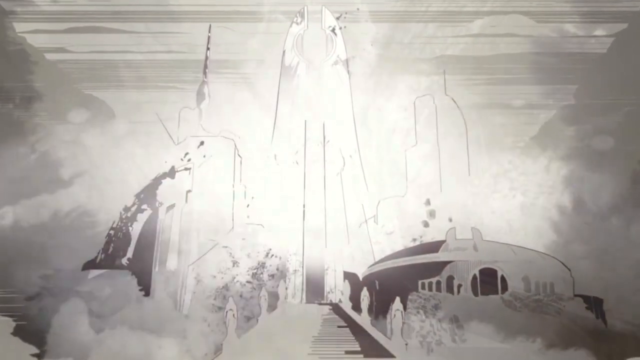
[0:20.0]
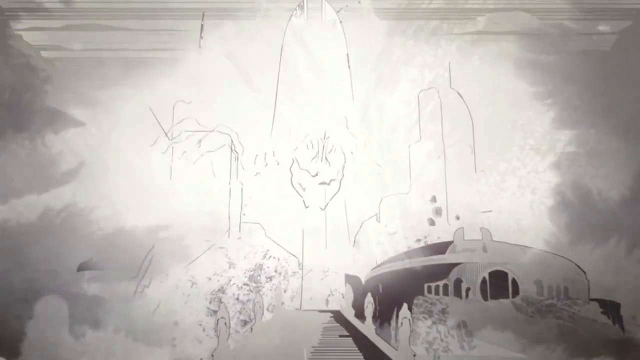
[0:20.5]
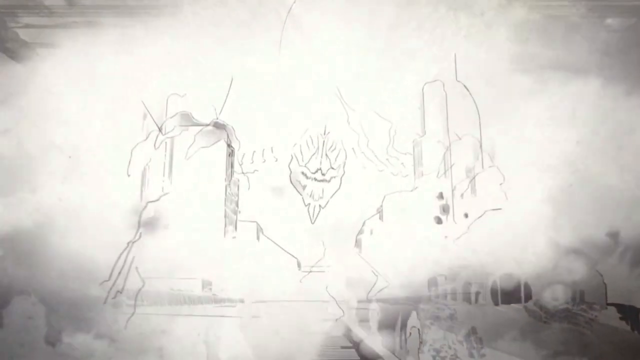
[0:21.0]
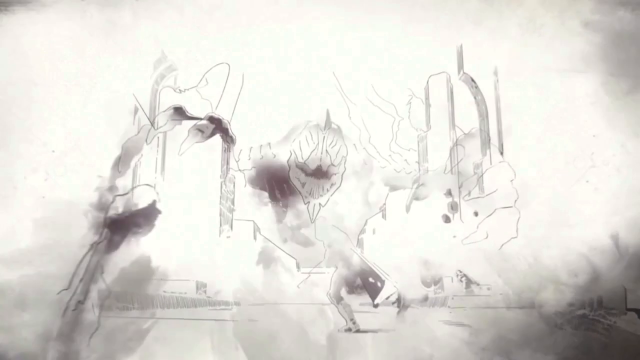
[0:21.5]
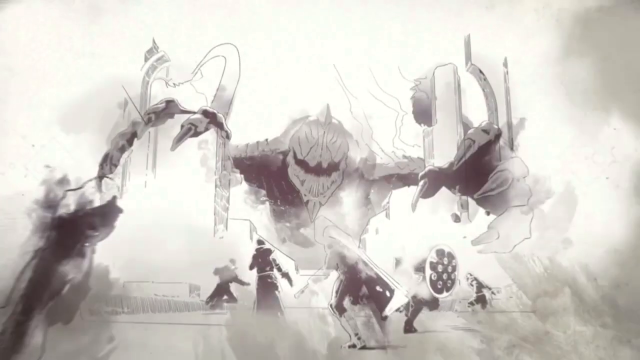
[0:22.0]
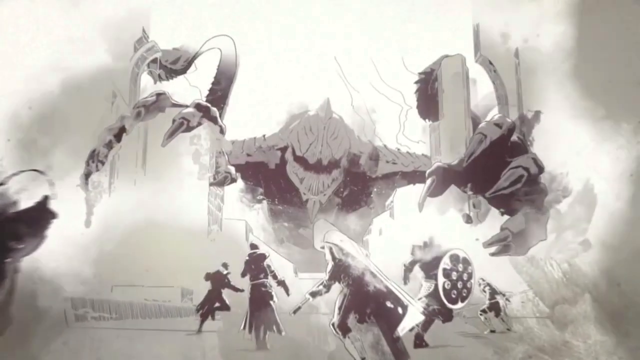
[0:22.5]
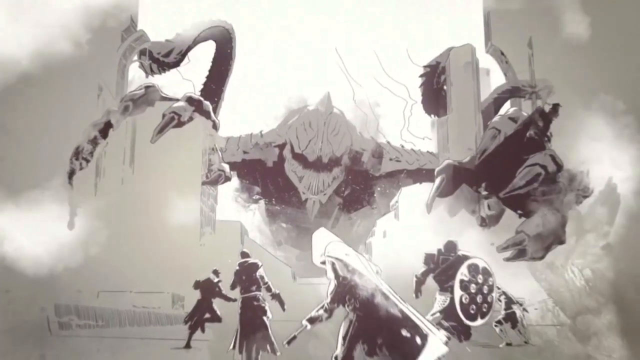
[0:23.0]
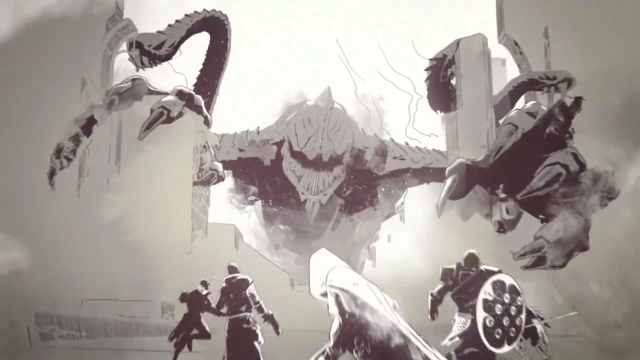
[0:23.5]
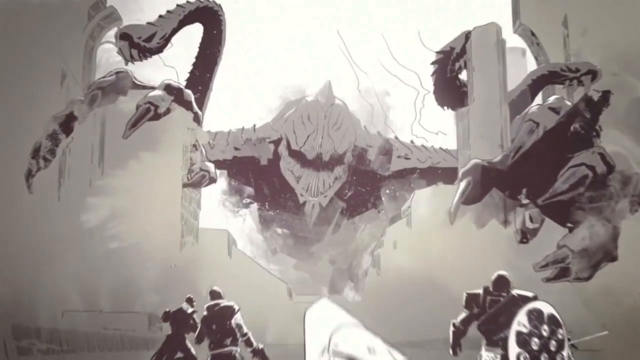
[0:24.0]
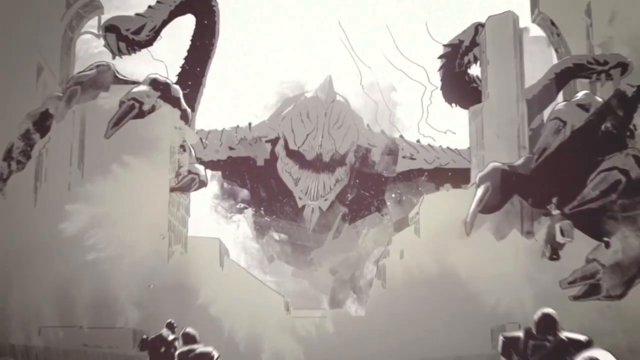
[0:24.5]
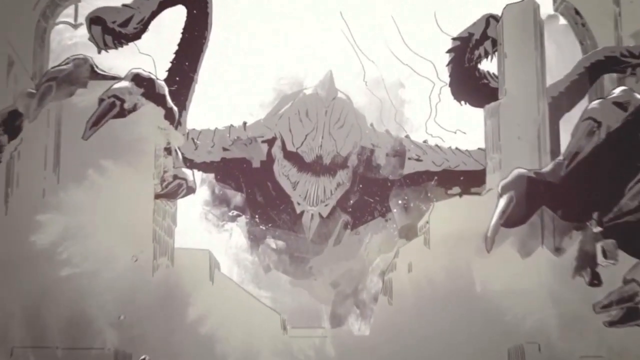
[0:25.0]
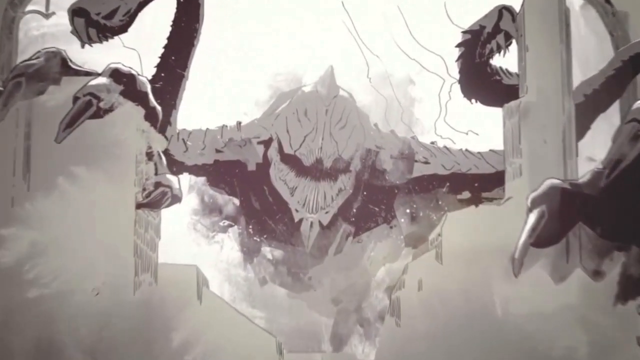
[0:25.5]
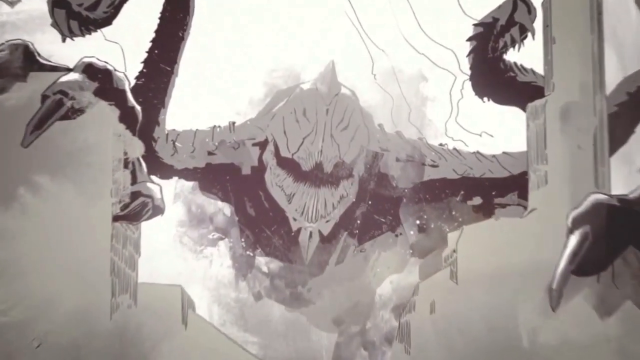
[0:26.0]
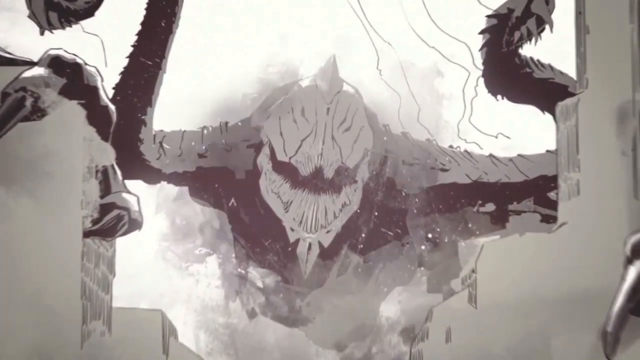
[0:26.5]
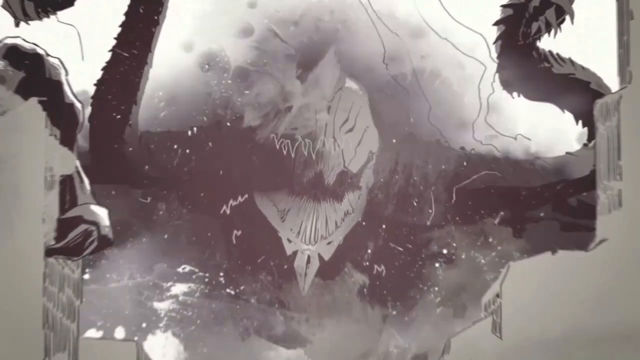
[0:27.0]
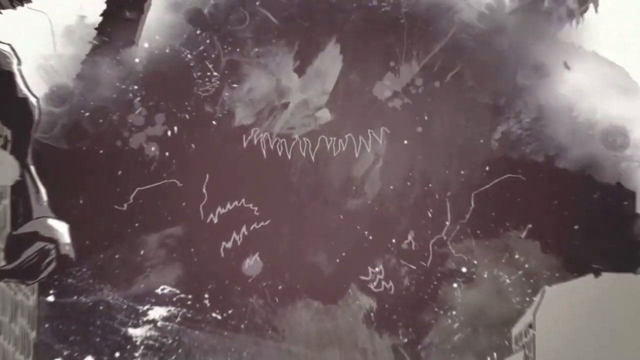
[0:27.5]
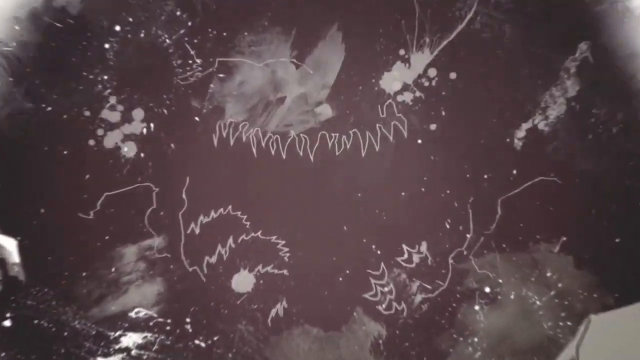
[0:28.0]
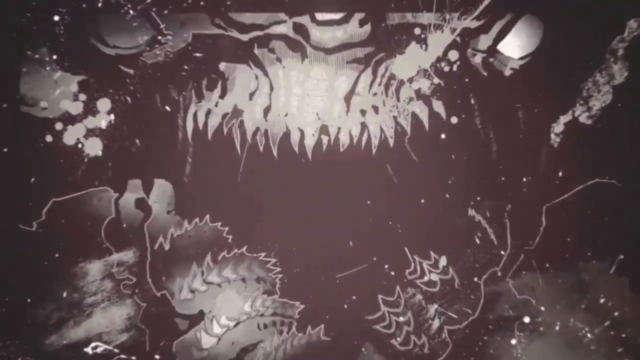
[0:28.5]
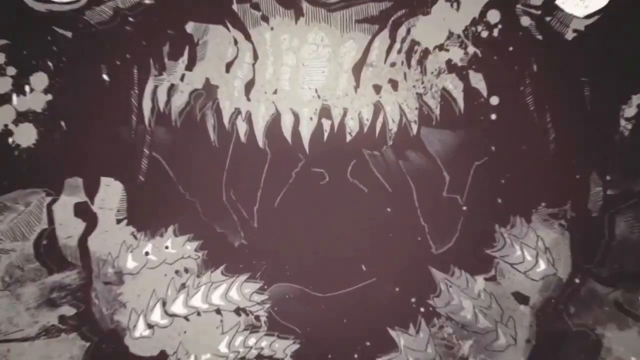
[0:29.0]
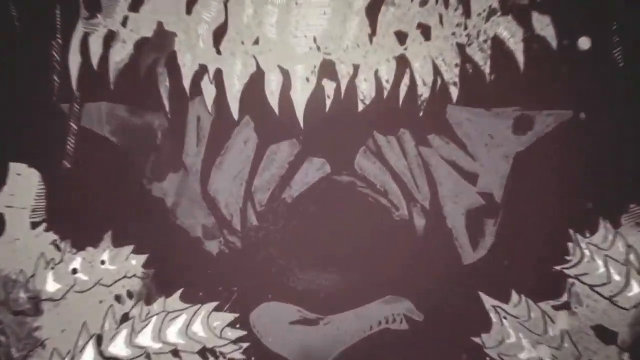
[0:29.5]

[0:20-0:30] Buildings start getting sketched against a grey background, and a flash of light emerges. A giant monster attacks the buildings while a lot of people on the ground scatter, some of them wearing shields. The camera zooms into the monster as it has its claws on the brick walls; its mouth is open. The monster disappears, and sketches lead into the monster's mouth. The civilization is destroyed by this unknown creature. Everything is a powdery grey: the monster is sketched in grey, and the people and the civilization are sketched in a muted colour tone. The whole look seems dull.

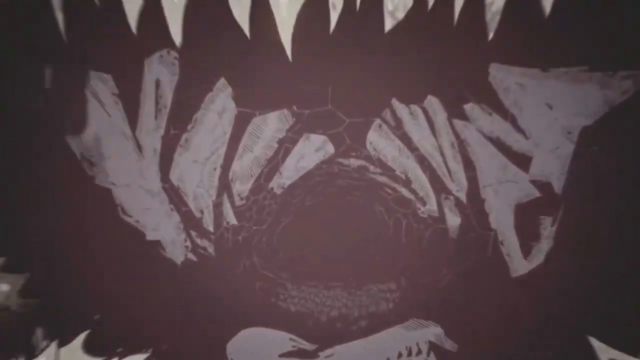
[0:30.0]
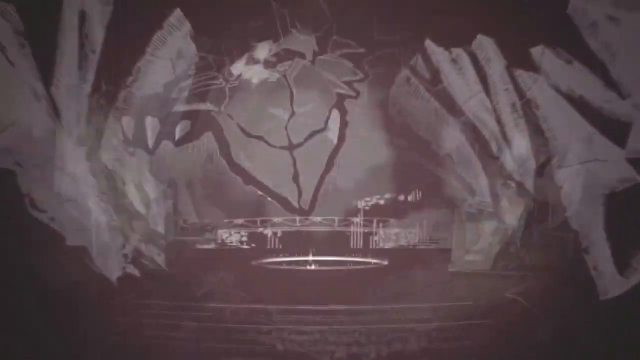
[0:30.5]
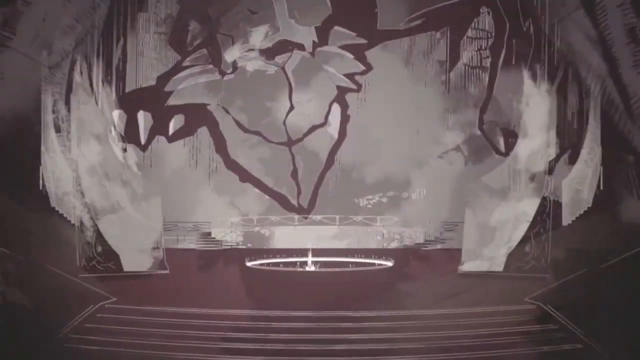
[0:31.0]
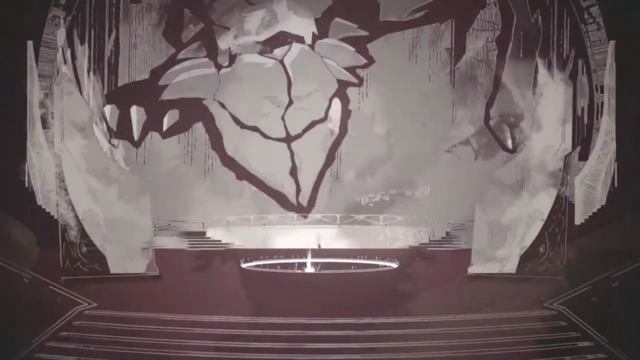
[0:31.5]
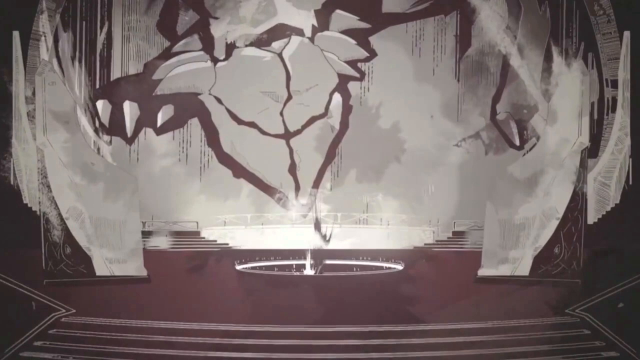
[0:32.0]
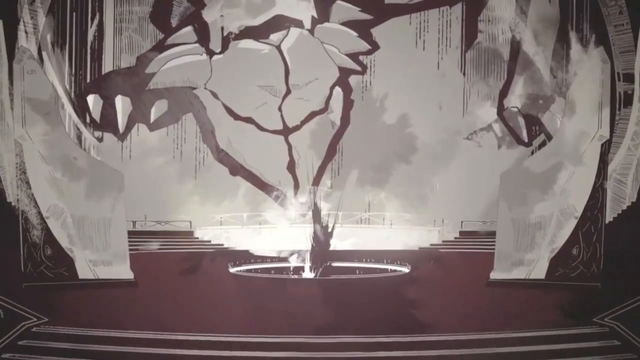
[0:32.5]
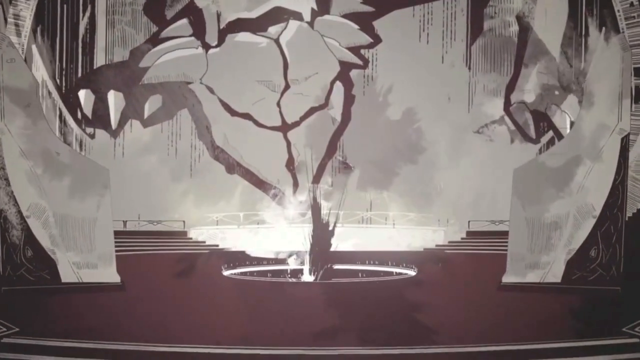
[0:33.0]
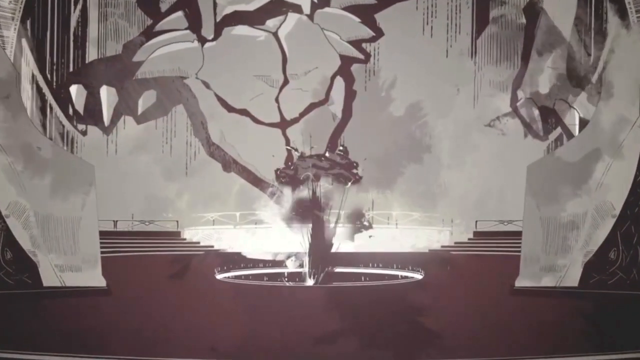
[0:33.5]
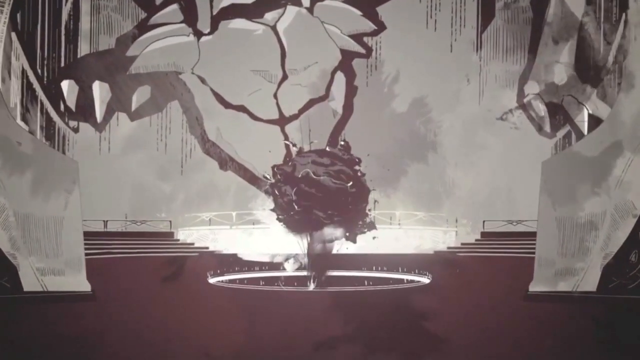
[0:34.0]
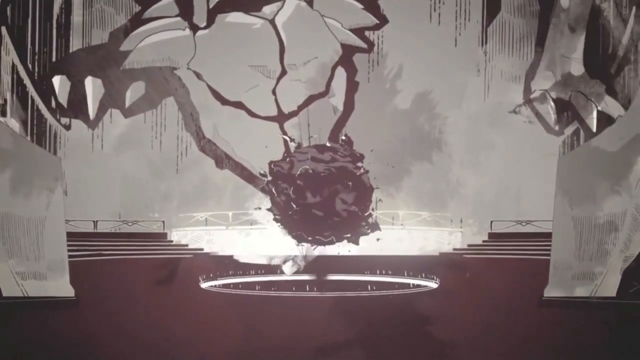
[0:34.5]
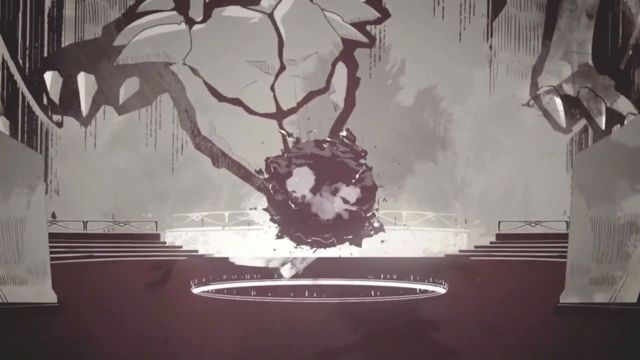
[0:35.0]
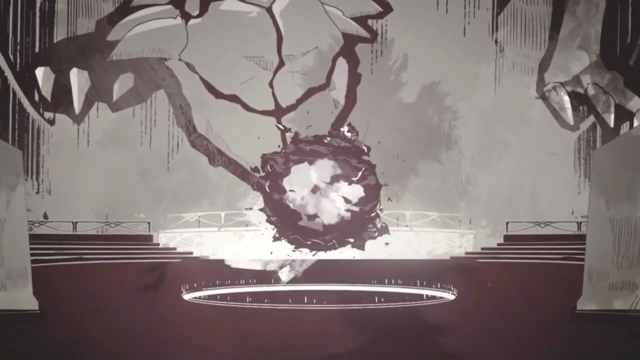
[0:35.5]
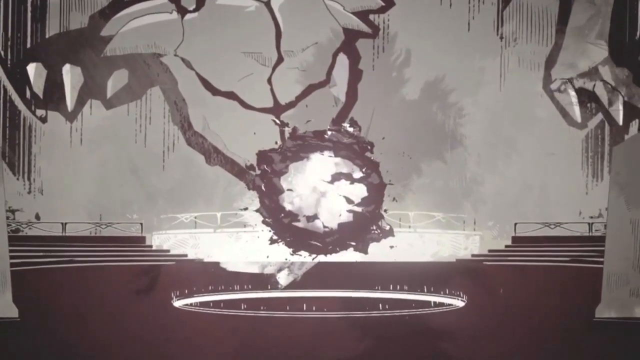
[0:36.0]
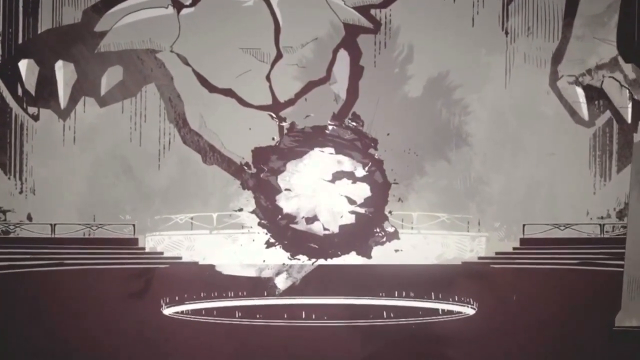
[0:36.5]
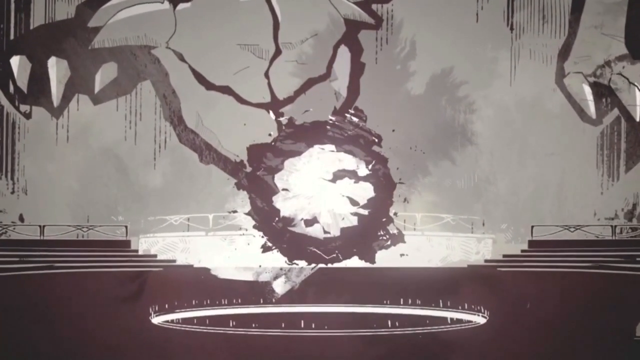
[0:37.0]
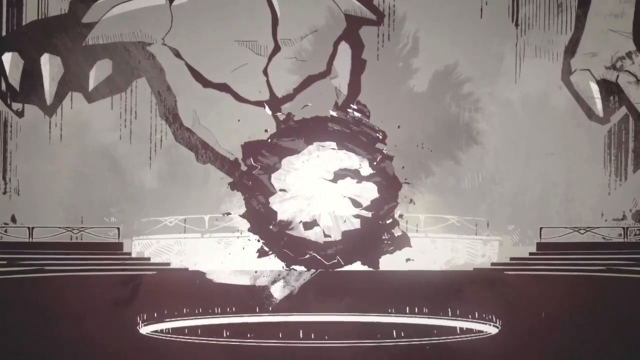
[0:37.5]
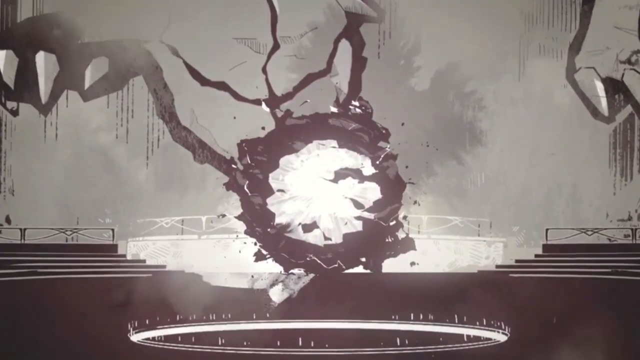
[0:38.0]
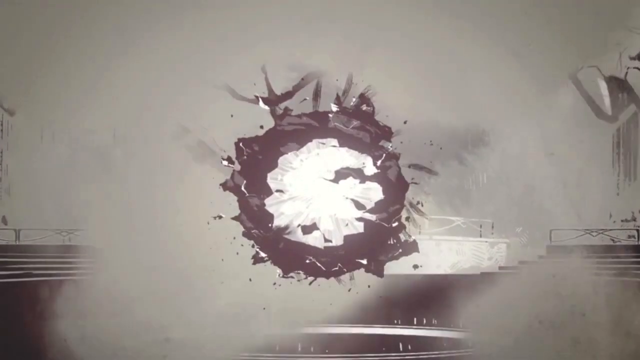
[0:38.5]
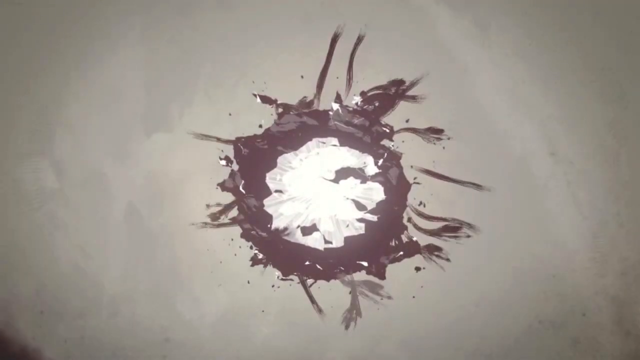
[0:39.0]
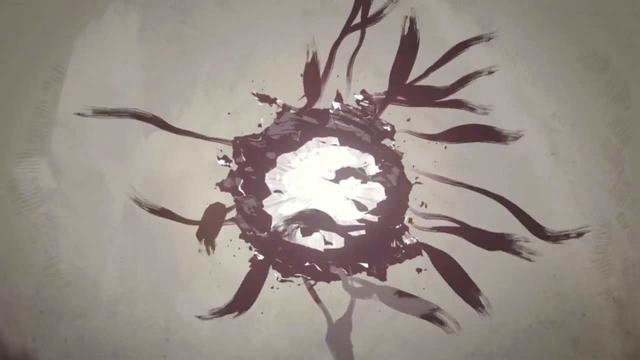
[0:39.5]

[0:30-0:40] The view dives into the monster's mouth and passes through its throat, which is rendered in muted tones. The inside of the monster's body looks hollow. Further in, a round organism is in the middle, levitating over a bright circle on the ground. The ground is a brownish-maroon colour, and there seem to be steps on the left. The organism explodes in the middle, and some lights appear. Dust flies around the organism, and veins pop out and spread.